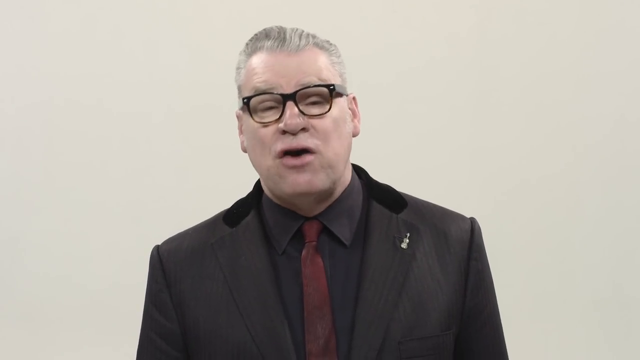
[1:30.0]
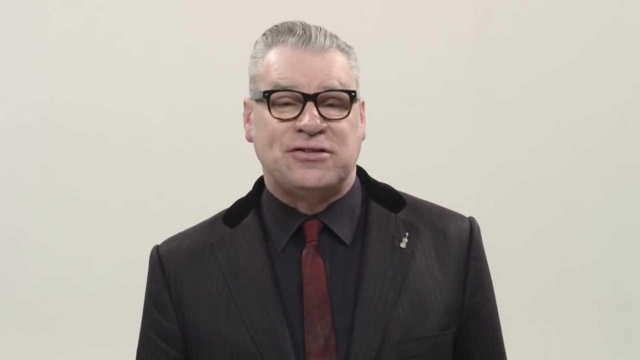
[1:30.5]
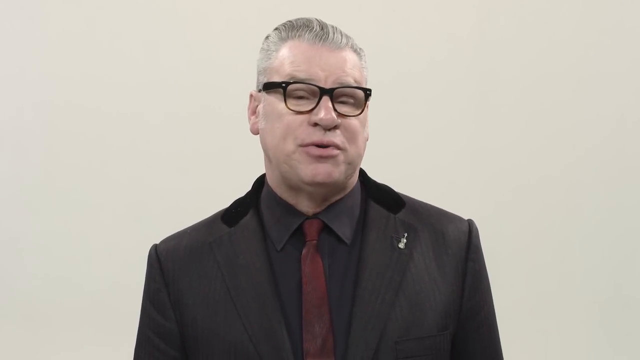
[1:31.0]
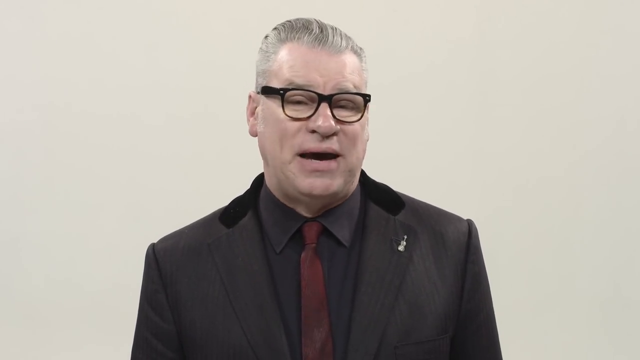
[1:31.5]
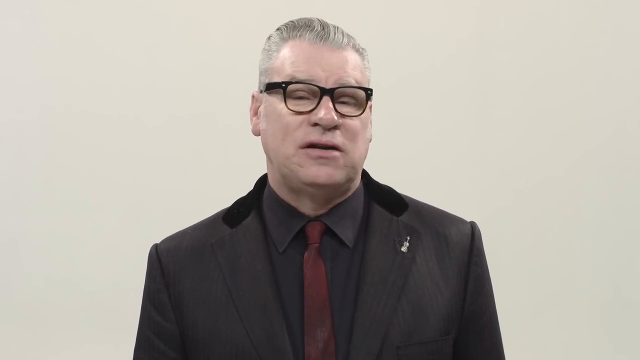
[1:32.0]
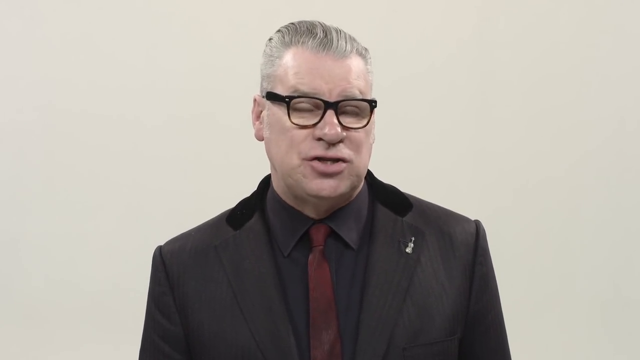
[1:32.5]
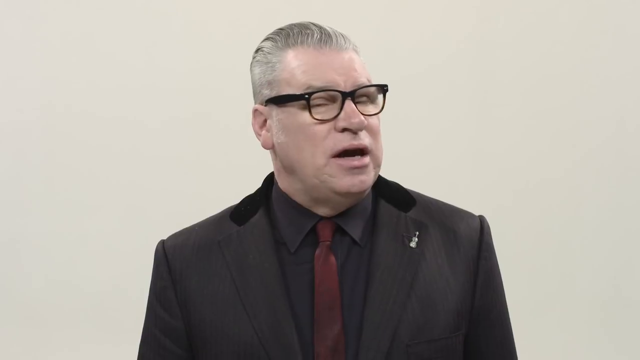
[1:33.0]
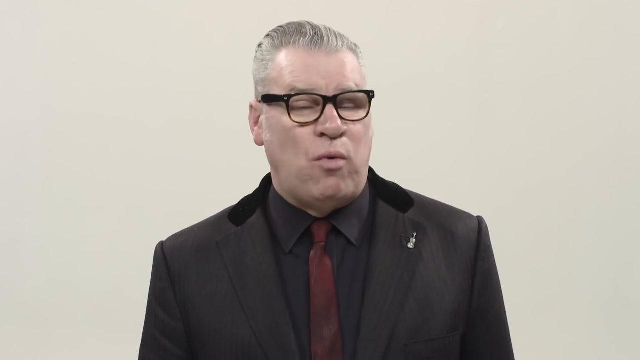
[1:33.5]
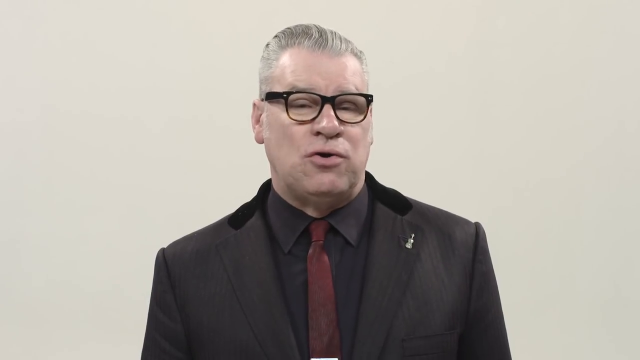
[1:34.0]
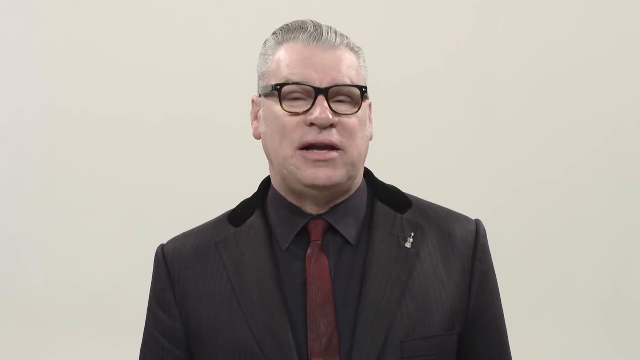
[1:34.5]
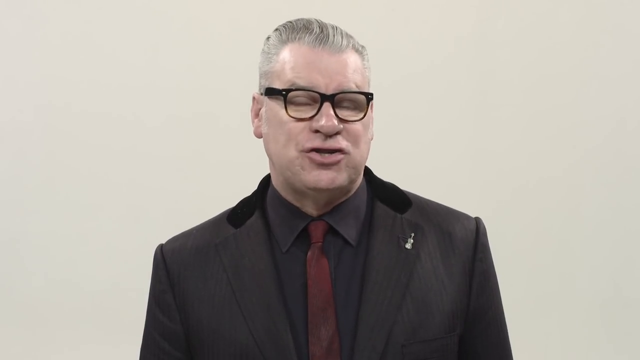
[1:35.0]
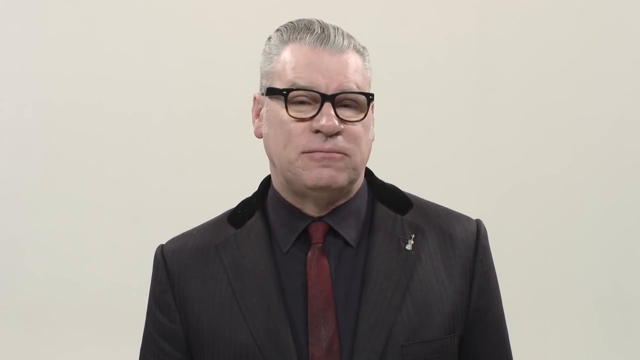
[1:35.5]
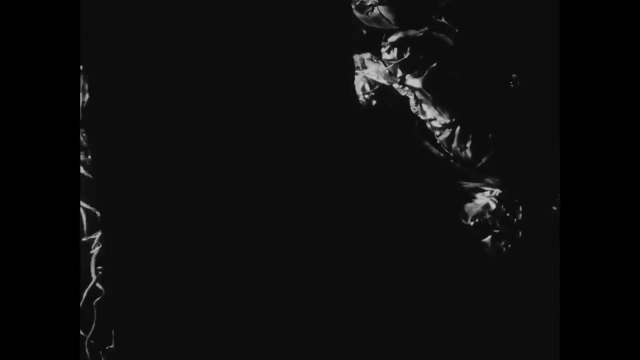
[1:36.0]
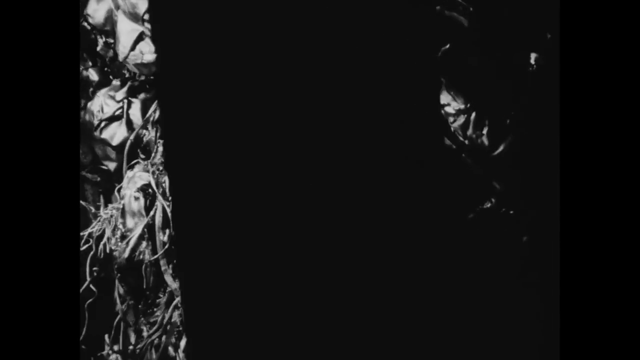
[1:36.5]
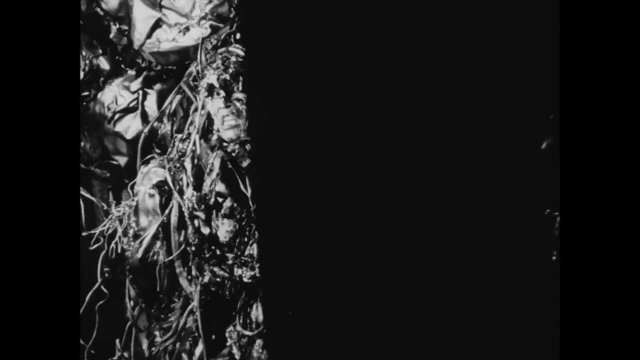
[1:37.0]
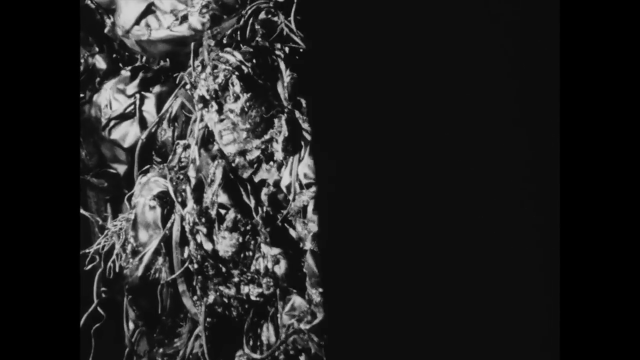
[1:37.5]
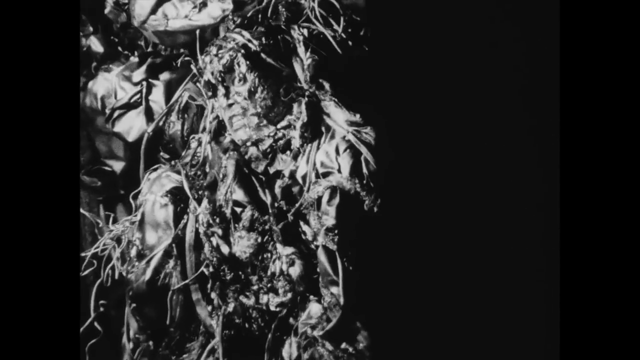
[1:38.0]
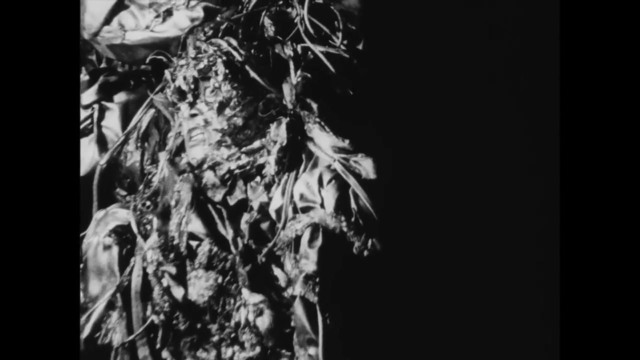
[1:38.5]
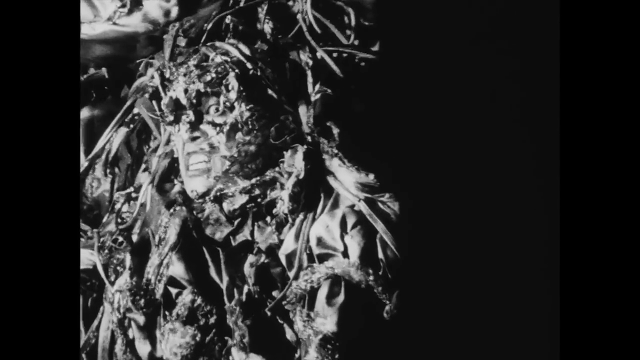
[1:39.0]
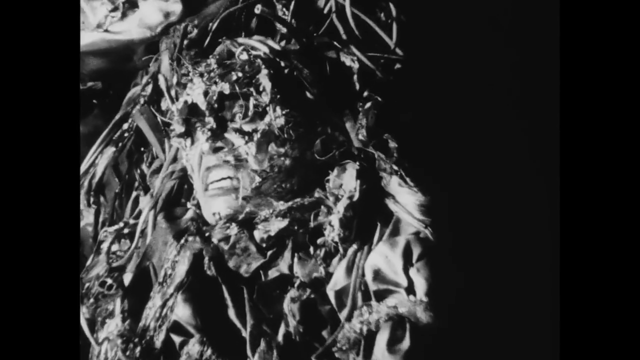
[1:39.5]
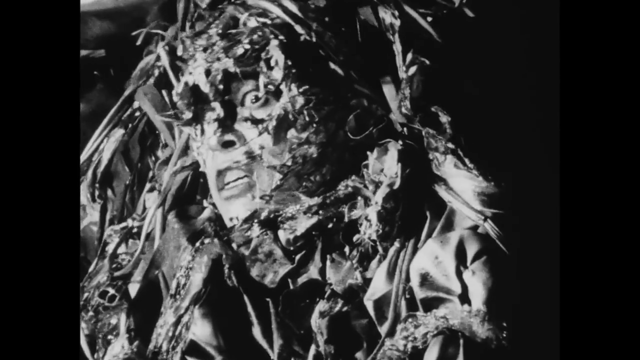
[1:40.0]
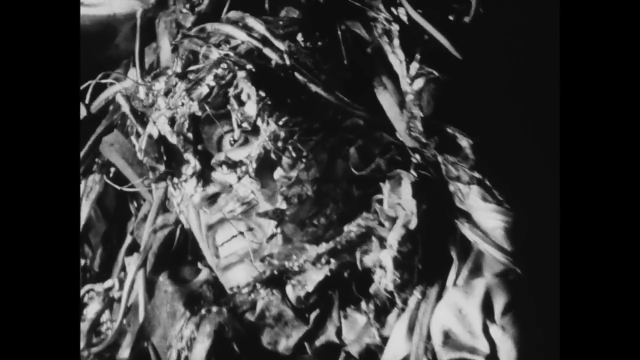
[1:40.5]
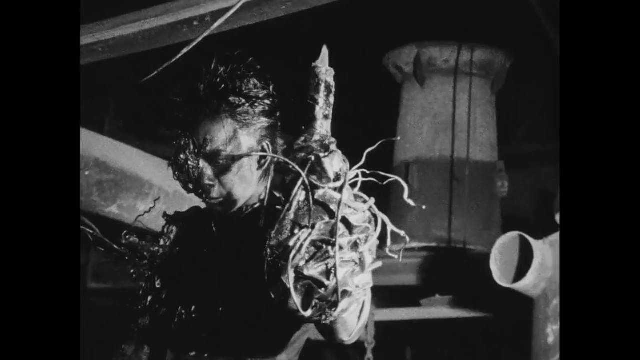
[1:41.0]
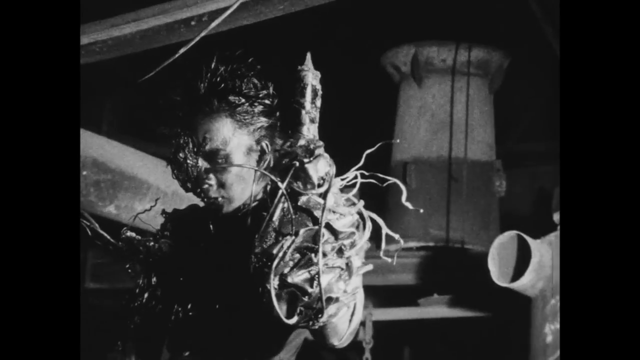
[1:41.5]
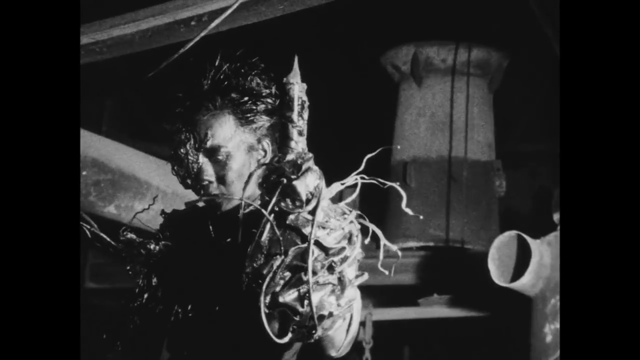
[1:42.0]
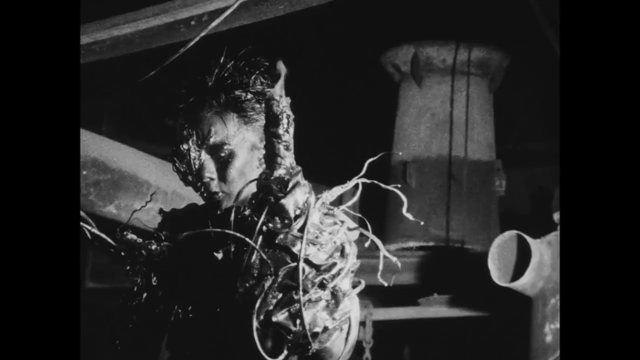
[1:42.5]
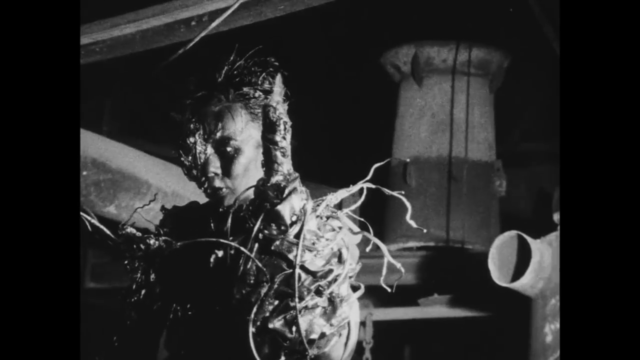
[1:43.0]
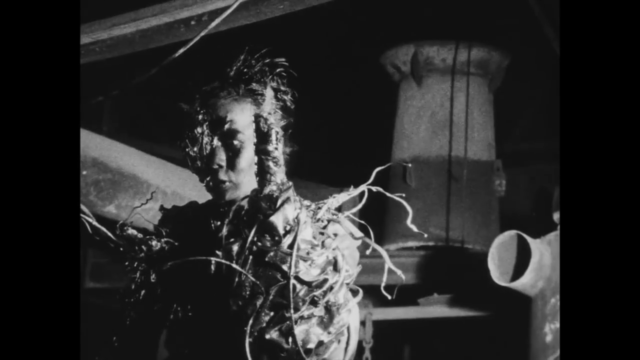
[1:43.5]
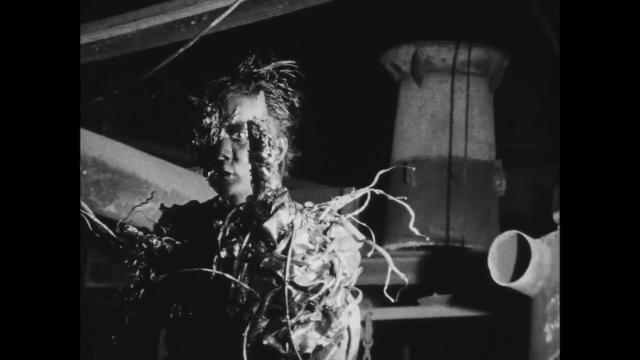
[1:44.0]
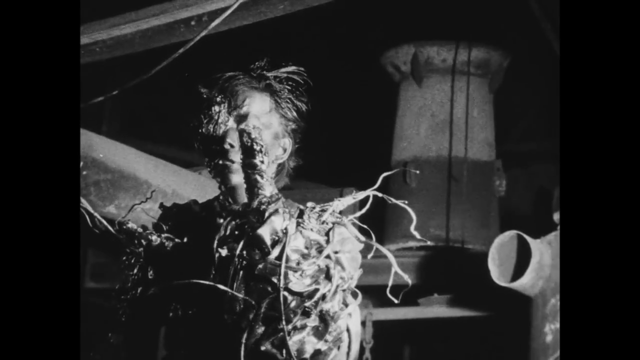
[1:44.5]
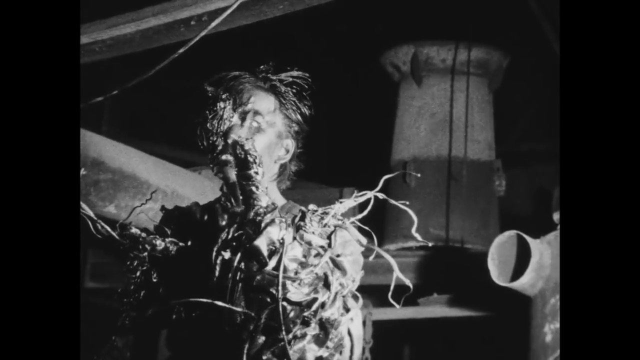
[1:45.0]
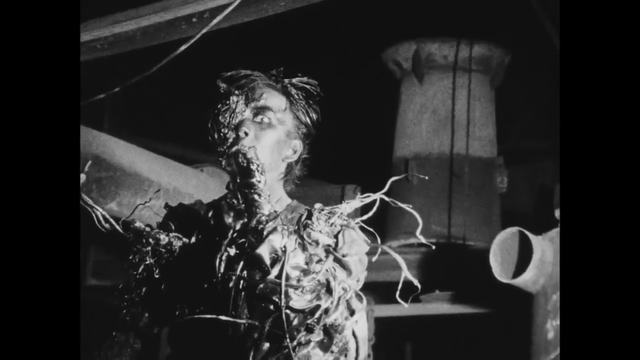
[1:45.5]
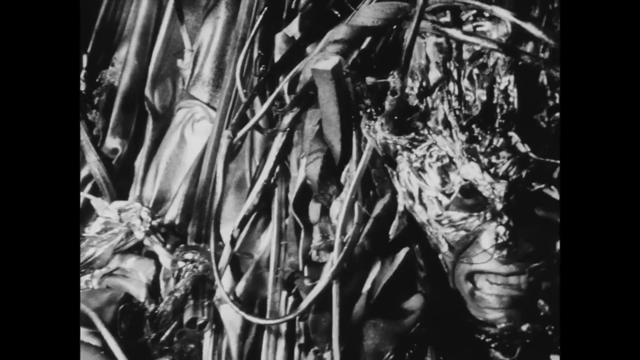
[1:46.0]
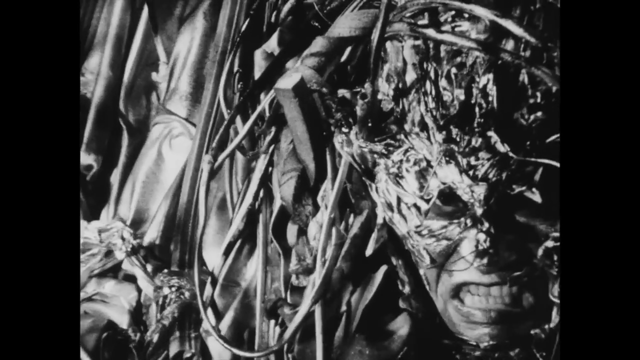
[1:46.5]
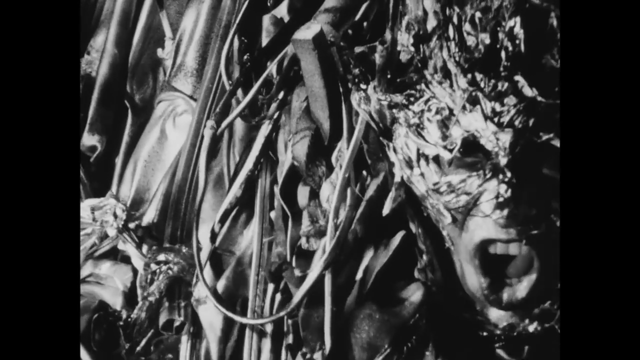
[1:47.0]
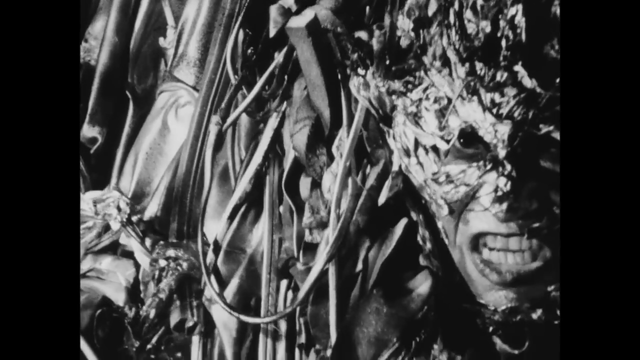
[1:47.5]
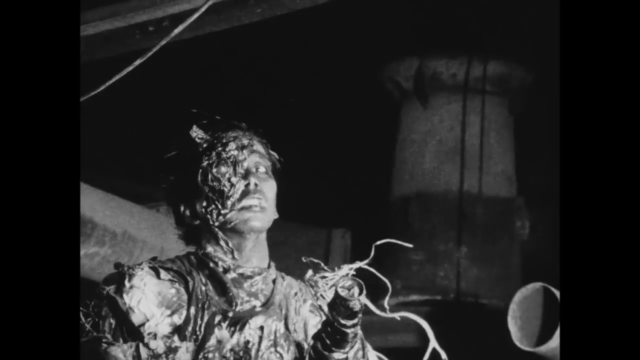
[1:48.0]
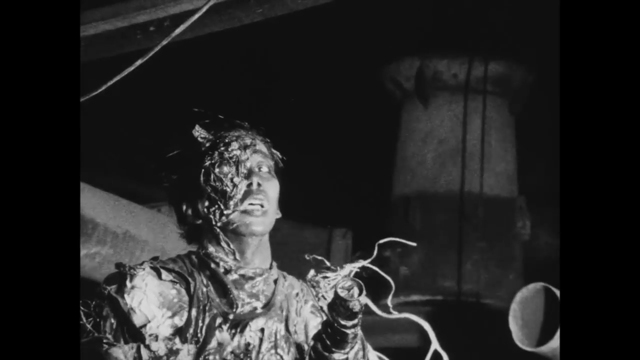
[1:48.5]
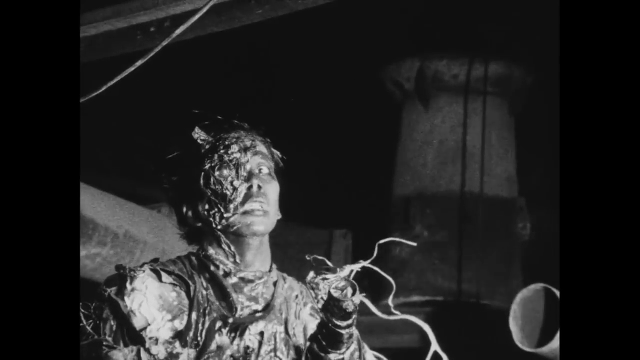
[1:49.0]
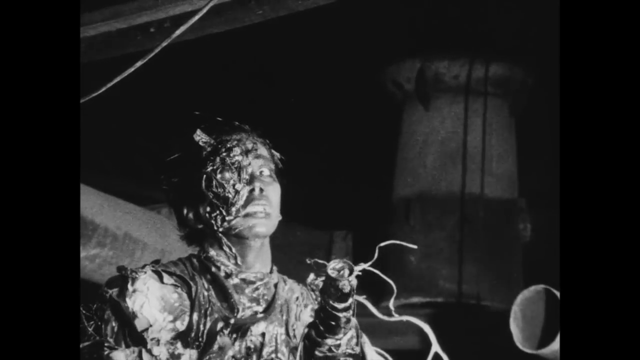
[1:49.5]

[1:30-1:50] The man with the glasses and suit speaks in front of the camera, still tilting his head a little to the left and looking out the right side of his eyes at the camera. He turns his head even further left, looking even more out of the right side of his eyes, and then stops talking. Another black-and-white clip from the movie shows a man covered in metal, such as cables and wires, covering all of his face except his mouth, nose and eyes. He grits his teeth, with a look of fear in his eyes. A different person, also covered in metal but less of it, has a left arm that terminates in a lit candle, which they slowly lower. The man with metal all over his face appears to be stuck to the wall, screaming. The person with the candle is seen again; the candle looks like it has gone out, and metal covers the whole left side of their face.